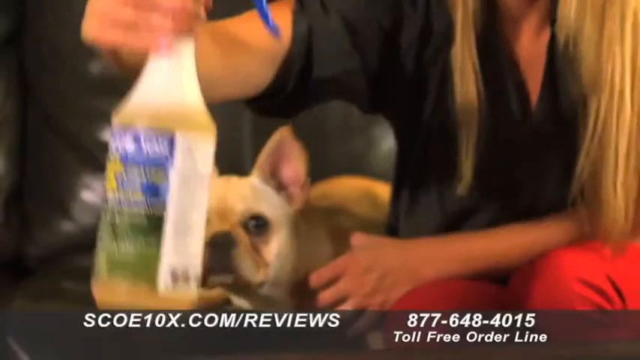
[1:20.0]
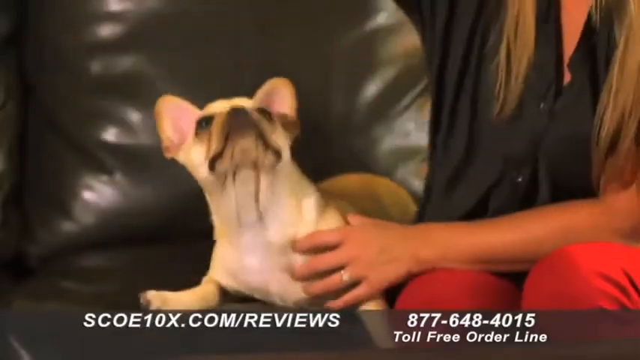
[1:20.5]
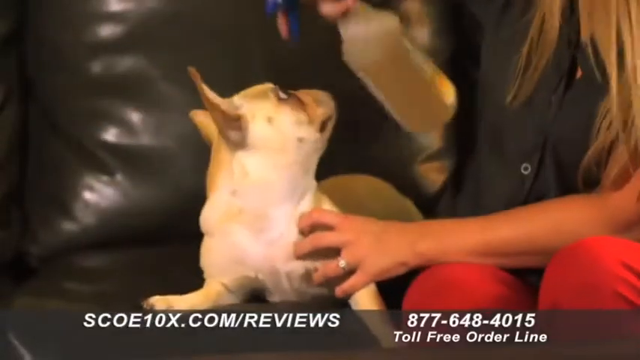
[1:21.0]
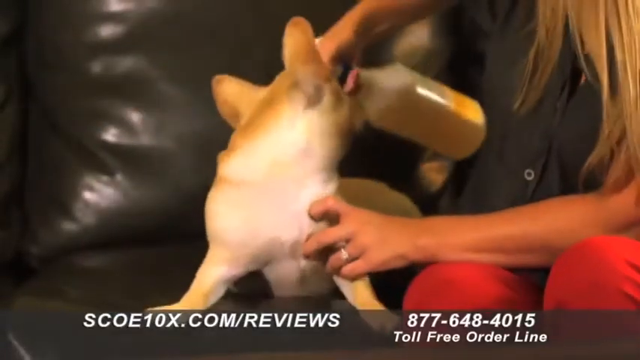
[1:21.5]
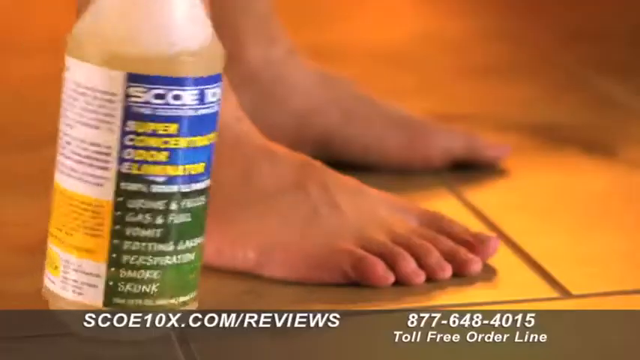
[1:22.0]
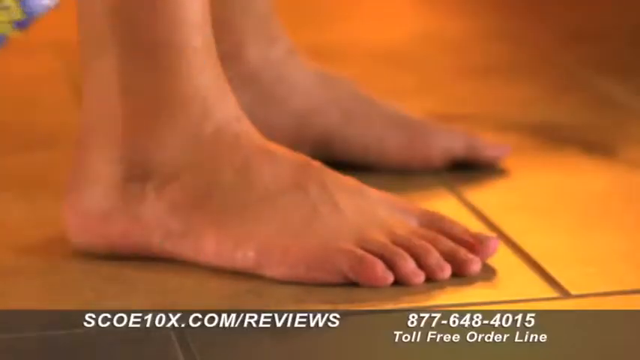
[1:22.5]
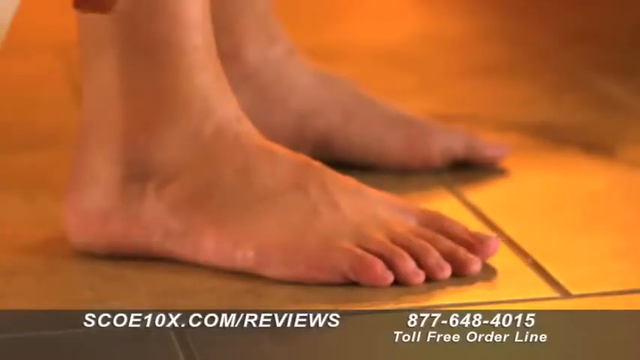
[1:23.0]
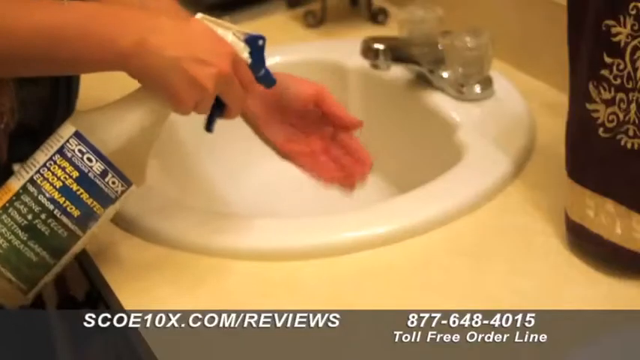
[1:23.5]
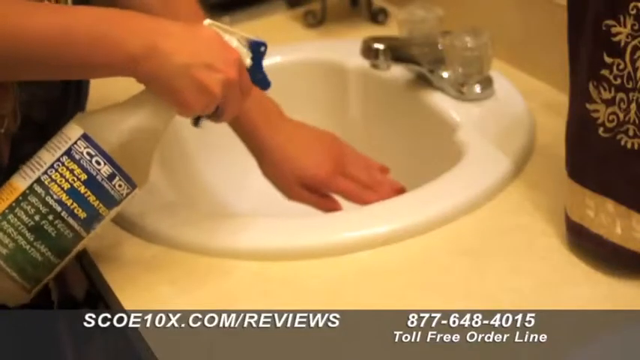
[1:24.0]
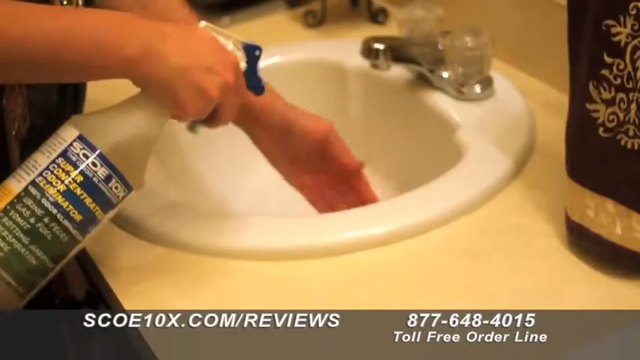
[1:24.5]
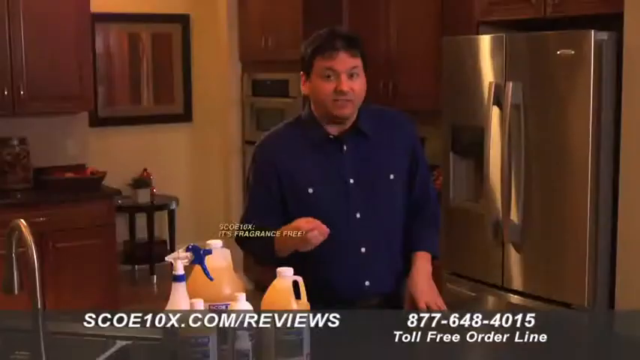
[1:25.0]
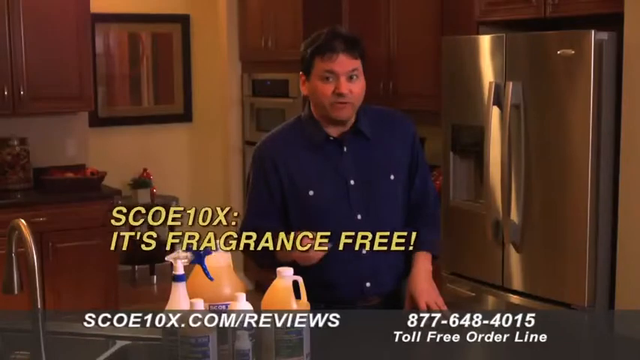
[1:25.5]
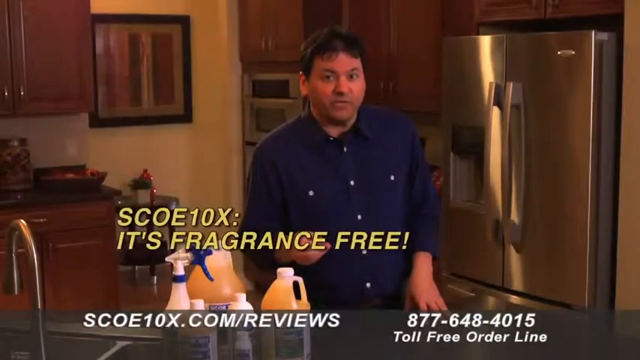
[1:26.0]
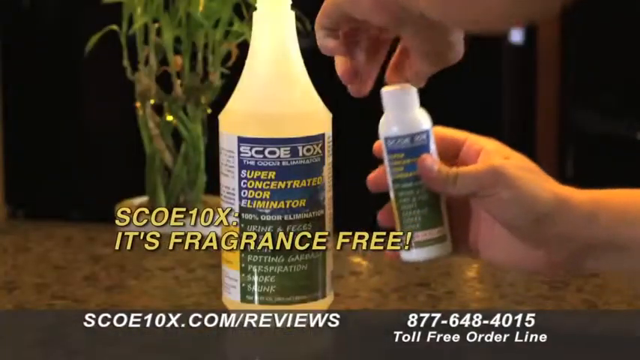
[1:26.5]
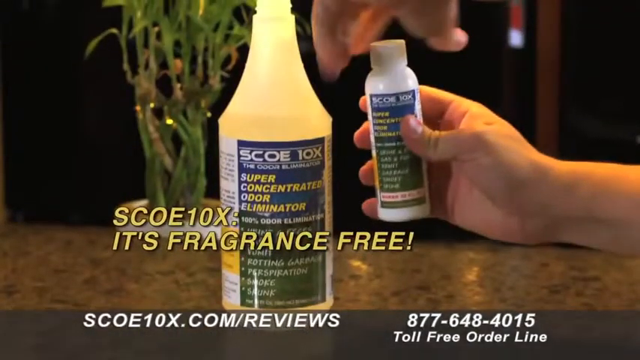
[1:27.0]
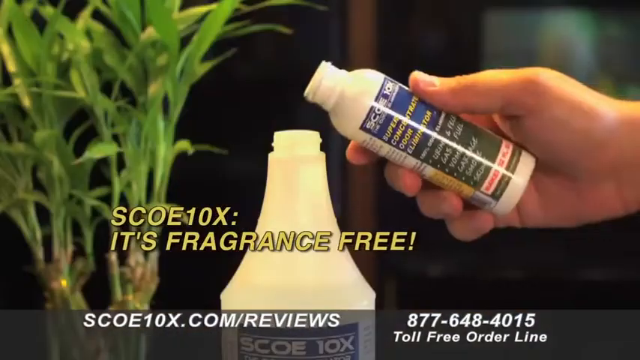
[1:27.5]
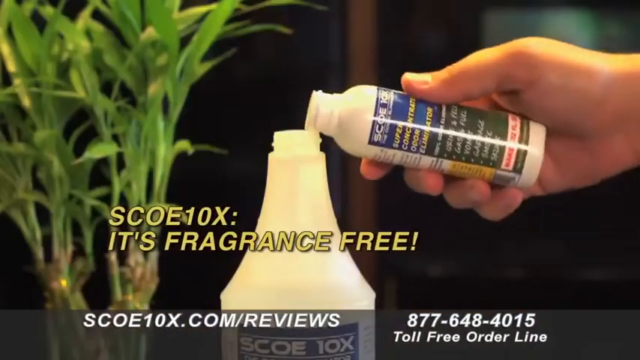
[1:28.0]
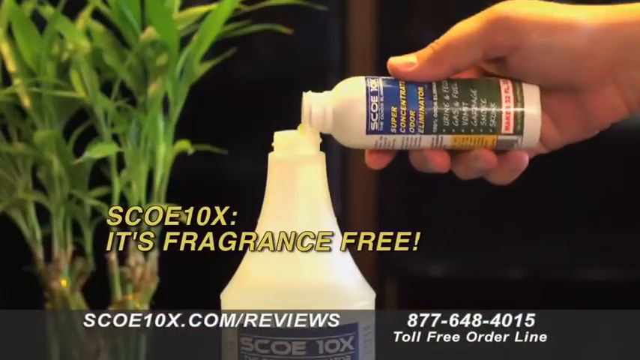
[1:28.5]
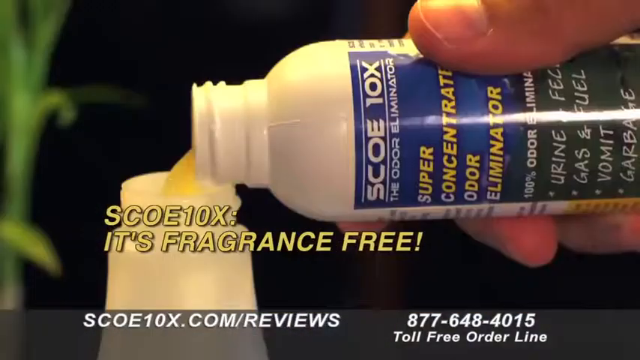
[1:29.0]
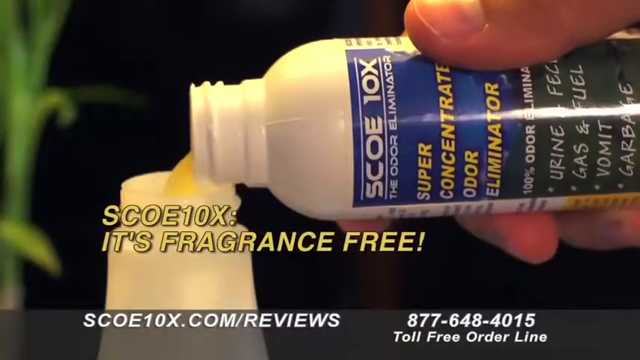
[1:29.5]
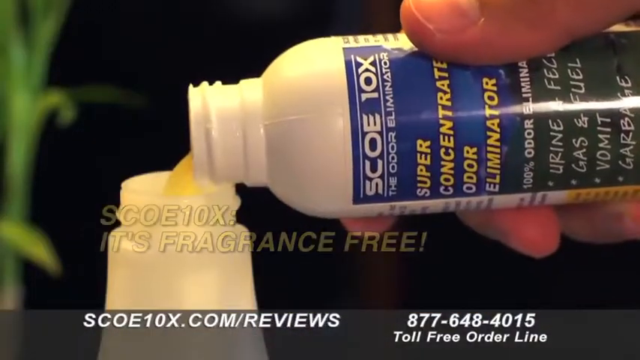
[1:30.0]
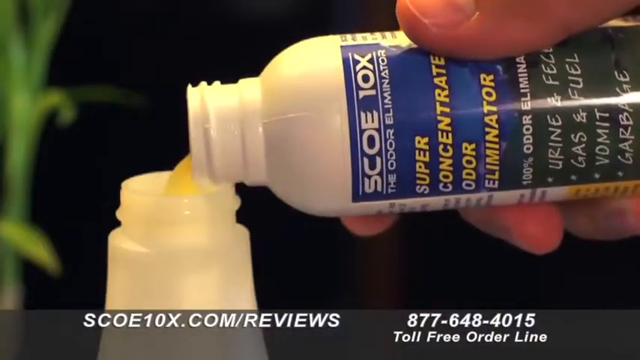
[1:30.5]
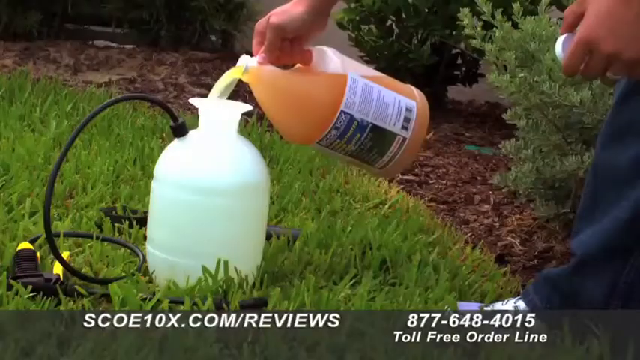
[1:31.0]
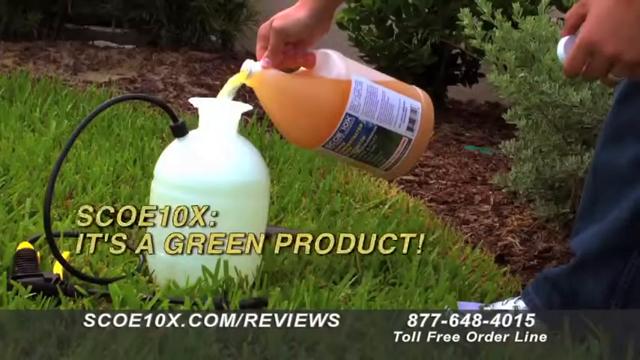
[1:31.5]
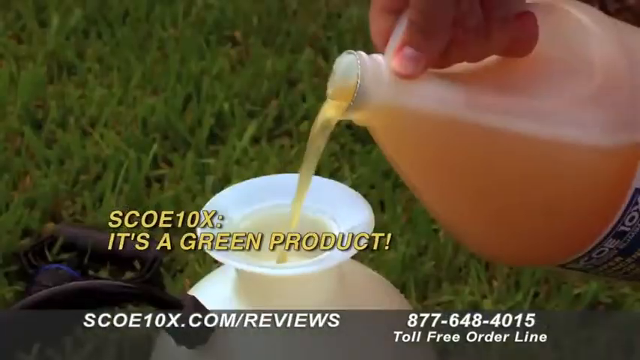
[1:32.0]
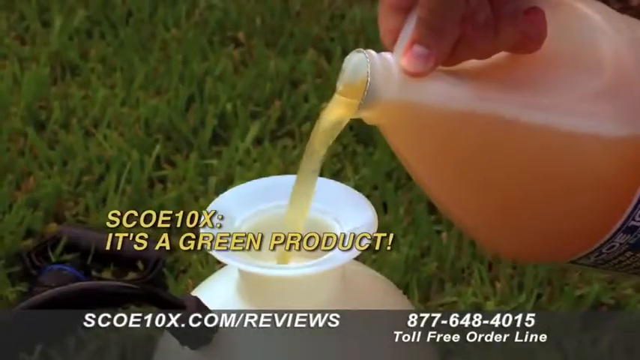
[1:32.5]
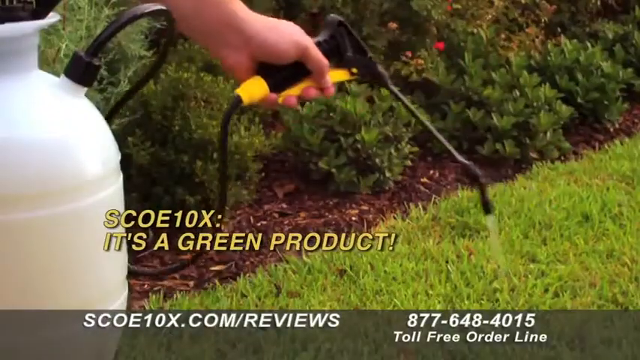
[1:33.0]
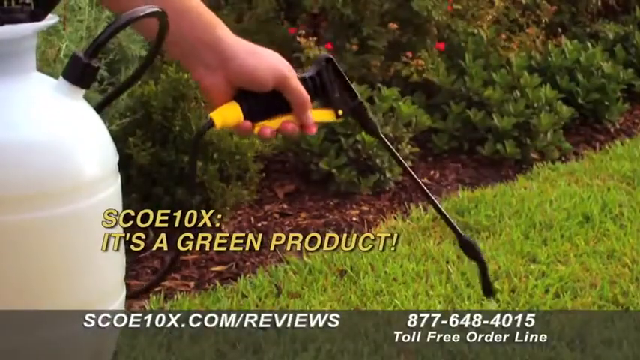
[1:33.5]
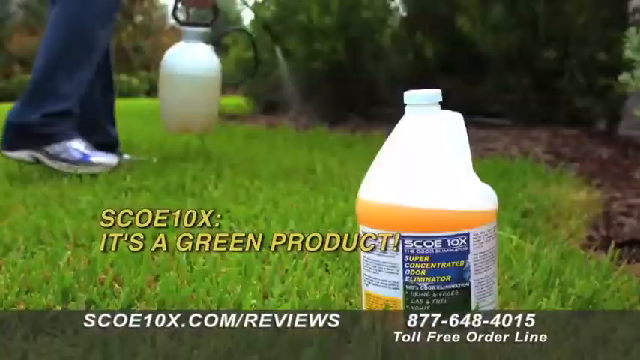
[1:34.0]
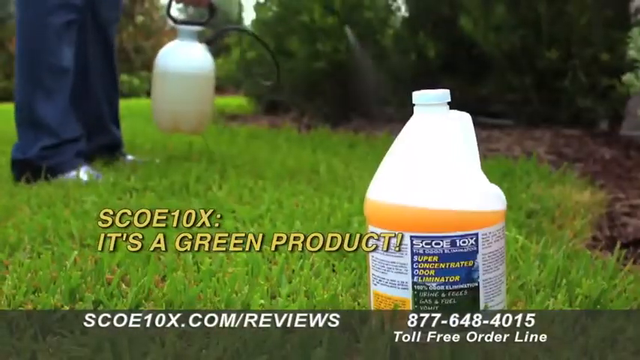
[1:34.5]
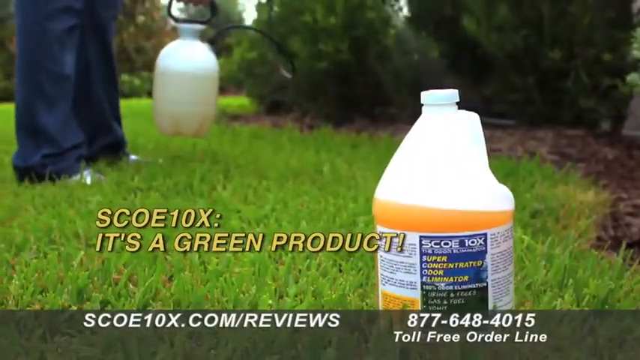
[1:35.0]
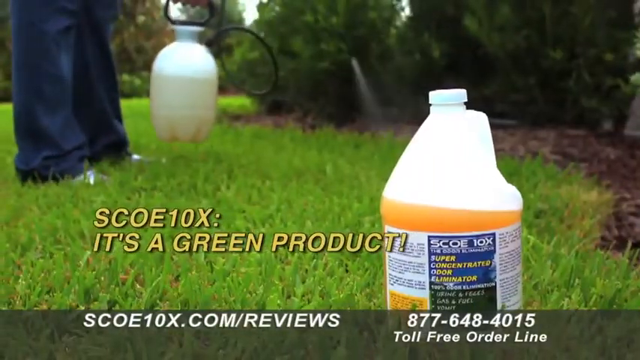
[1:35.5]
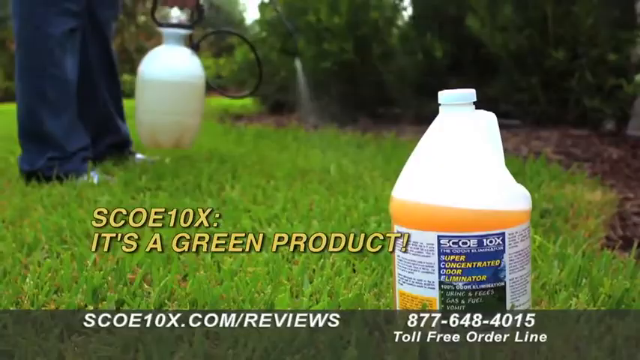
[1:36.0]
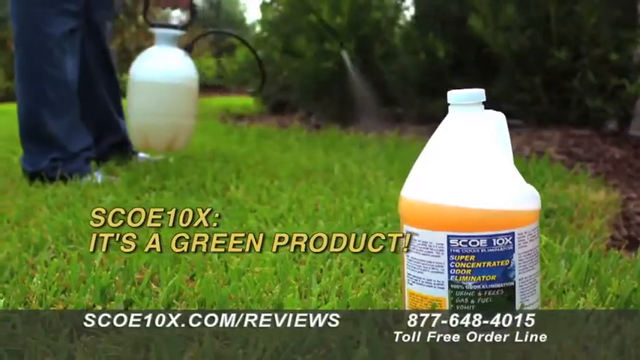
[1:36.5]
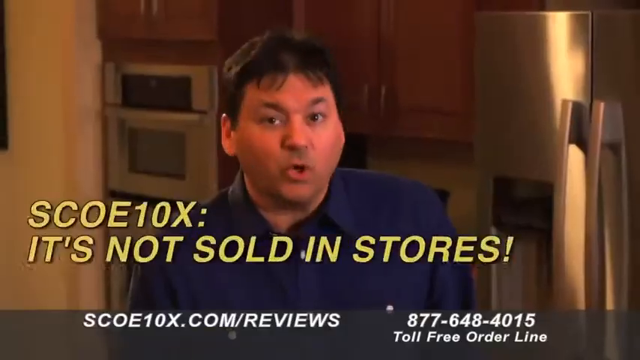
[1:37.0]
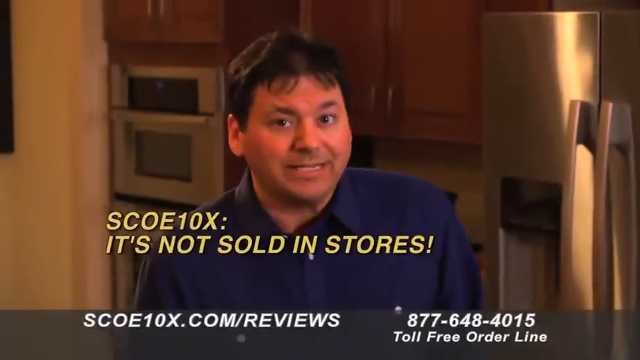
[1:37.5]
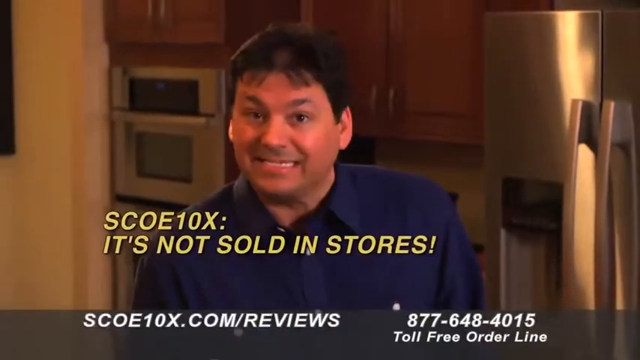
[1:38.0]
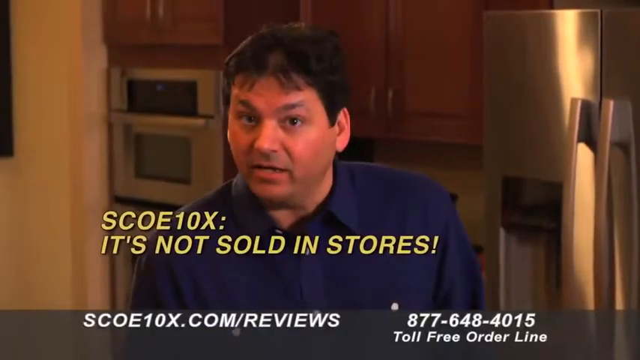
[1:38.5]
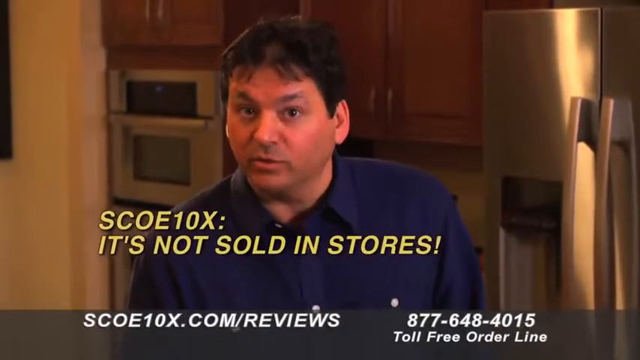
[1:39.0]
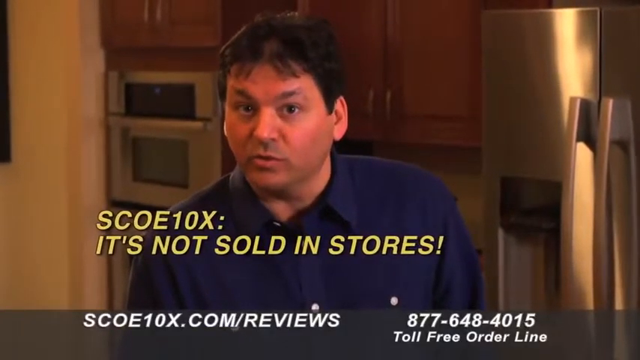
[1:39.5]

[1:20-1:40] A white woman with long blonde hair holds the product, a spray bottle, in her hand. She seems to be sitting on what looks like a black leather couch, and right behind her is a small dog that looks like some kind of pug or terrier-type dog. With her right hand, on the viewer's left, she moves the bottle above the dog's head and out of frame, and the dog looks up toward the bottle. She holds one of the dog's legs with her left hand, on the viewer's right. She then moves the bottle behind the dog and appears to spray the product onto the couch behind it. The video then cuts to what looks like a pair of feet, with a clear bottle of Sko 10X containing yellow liquid in the foreground, closer to the camera. The person seems to reach a hand down and pull the bottle up toward them, then turns the bottle forward and sprays downward toward the floor.